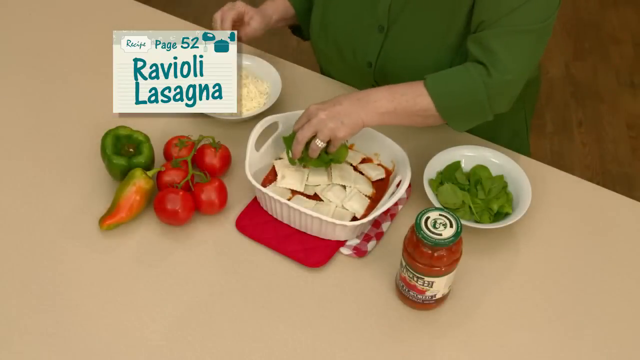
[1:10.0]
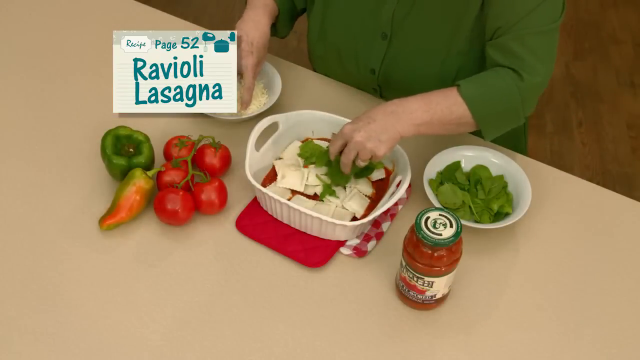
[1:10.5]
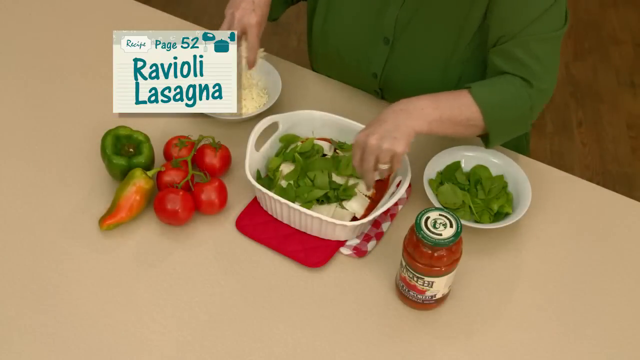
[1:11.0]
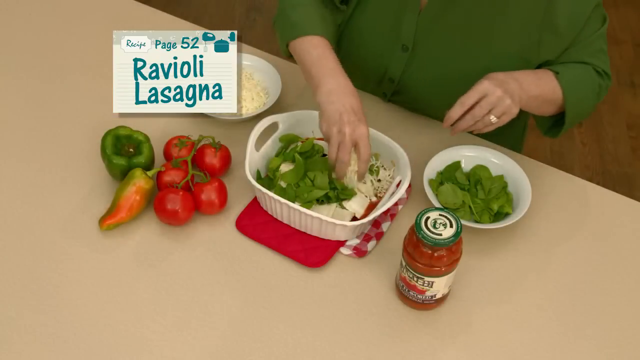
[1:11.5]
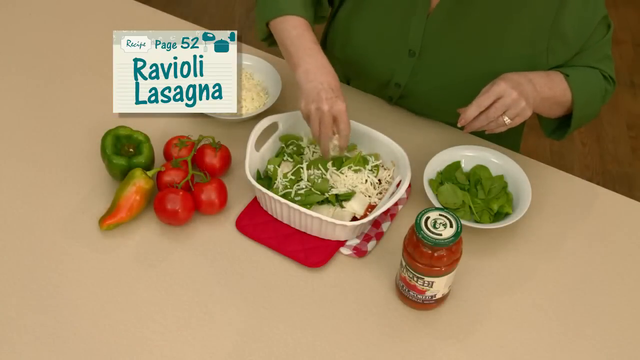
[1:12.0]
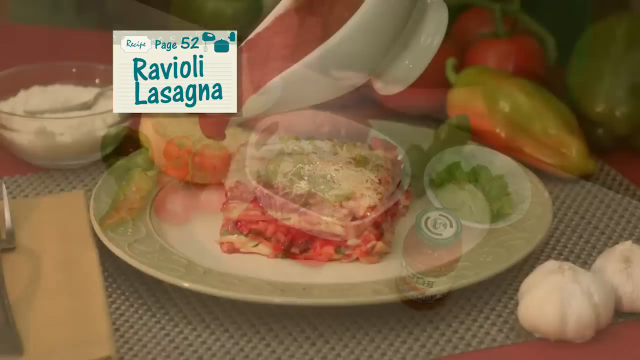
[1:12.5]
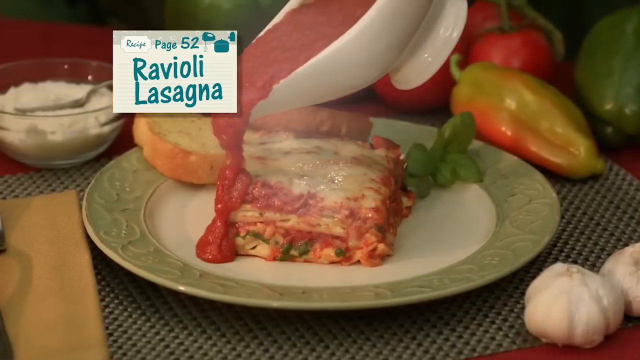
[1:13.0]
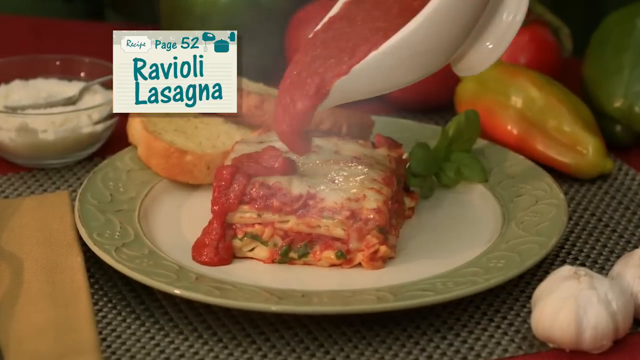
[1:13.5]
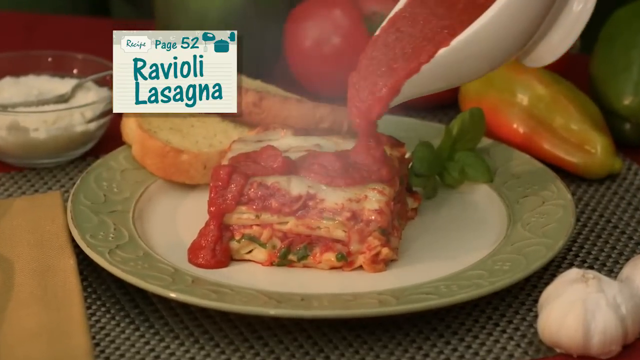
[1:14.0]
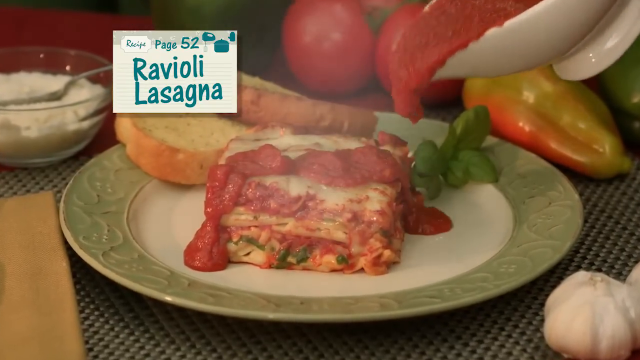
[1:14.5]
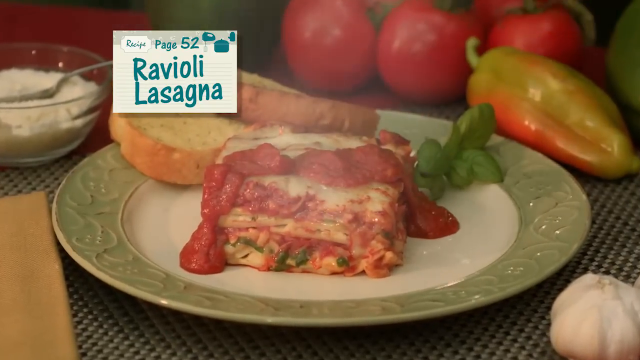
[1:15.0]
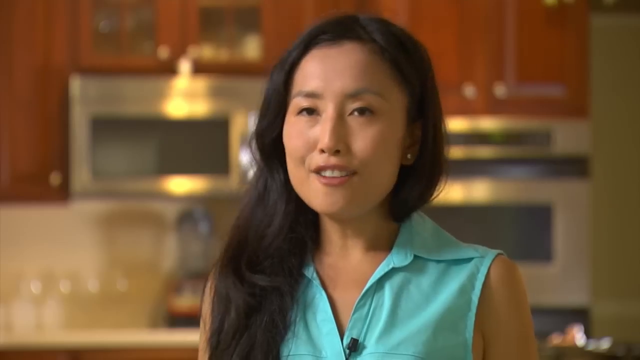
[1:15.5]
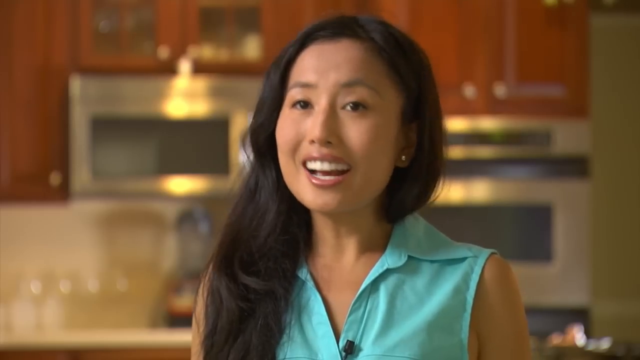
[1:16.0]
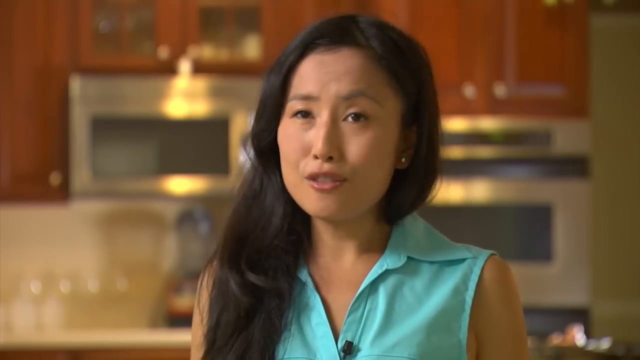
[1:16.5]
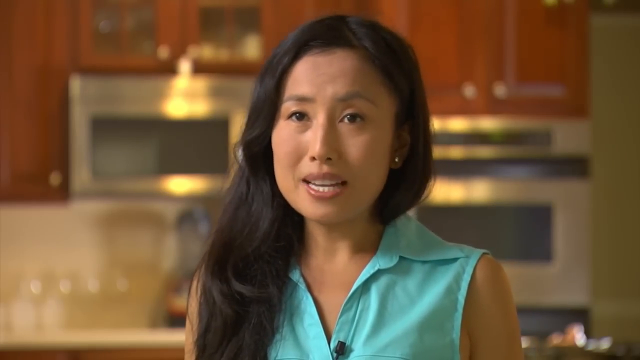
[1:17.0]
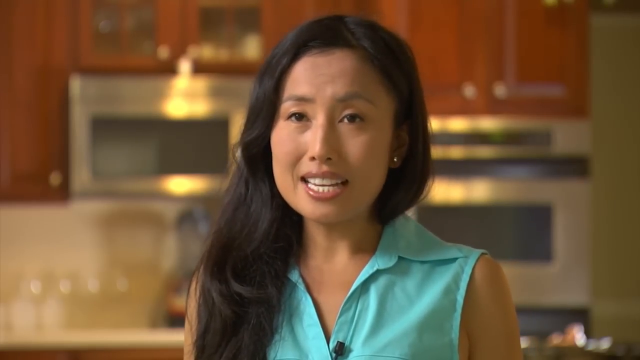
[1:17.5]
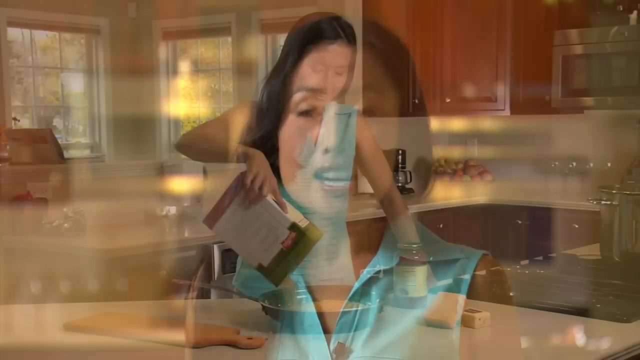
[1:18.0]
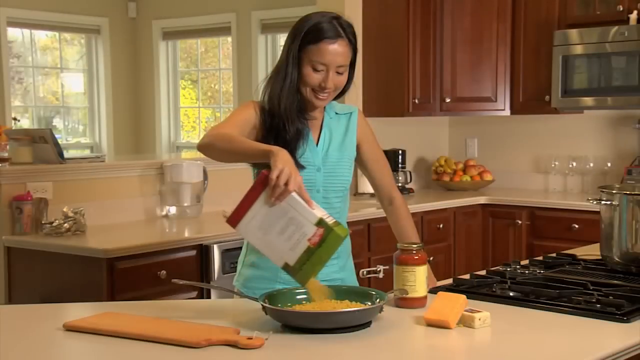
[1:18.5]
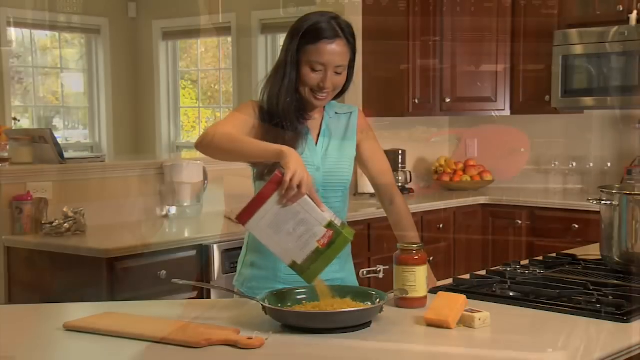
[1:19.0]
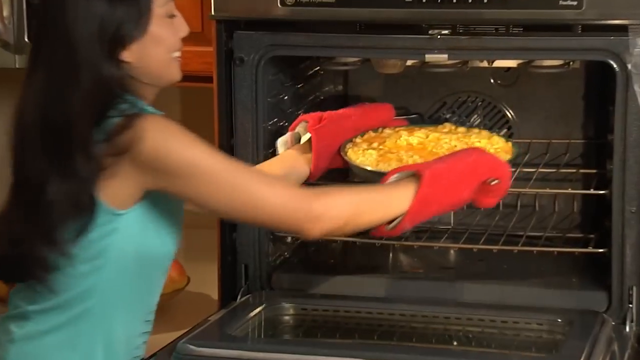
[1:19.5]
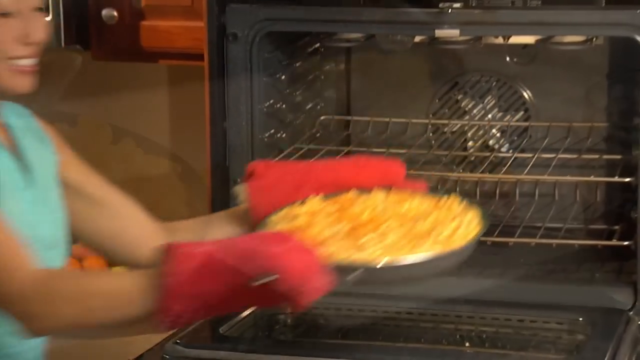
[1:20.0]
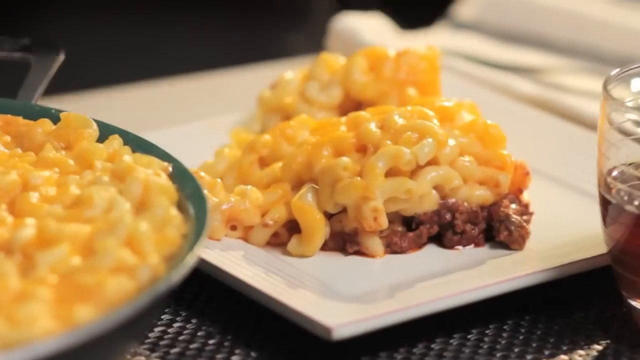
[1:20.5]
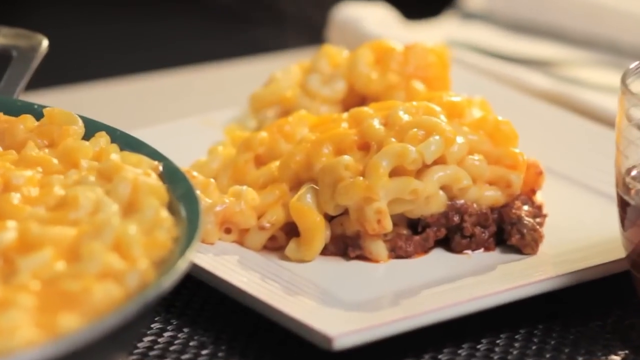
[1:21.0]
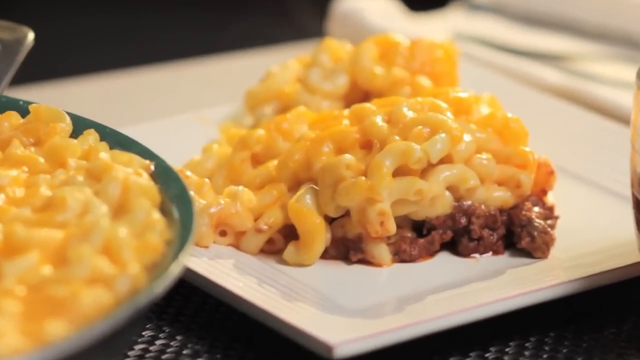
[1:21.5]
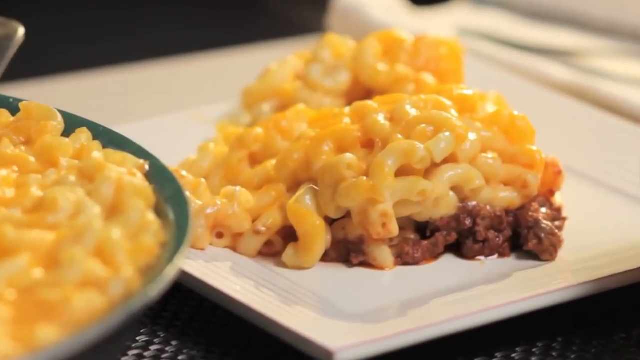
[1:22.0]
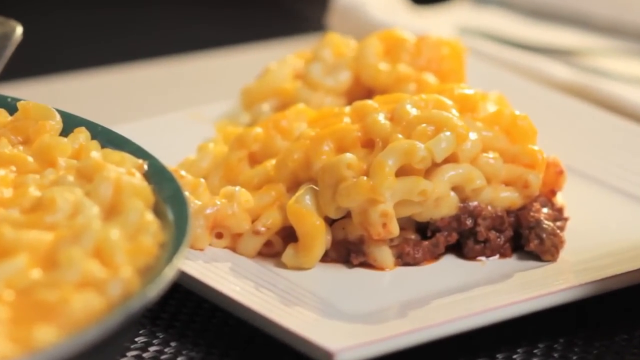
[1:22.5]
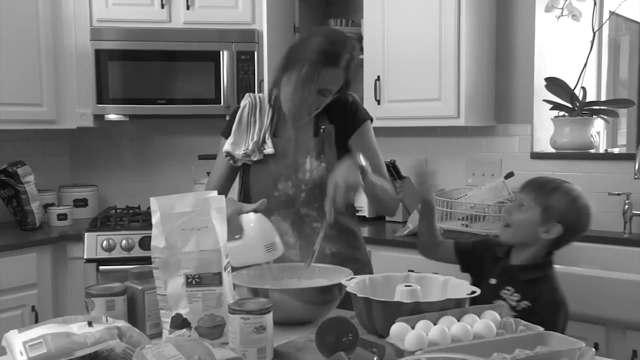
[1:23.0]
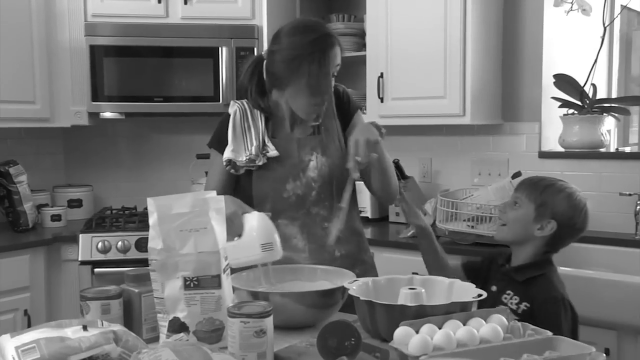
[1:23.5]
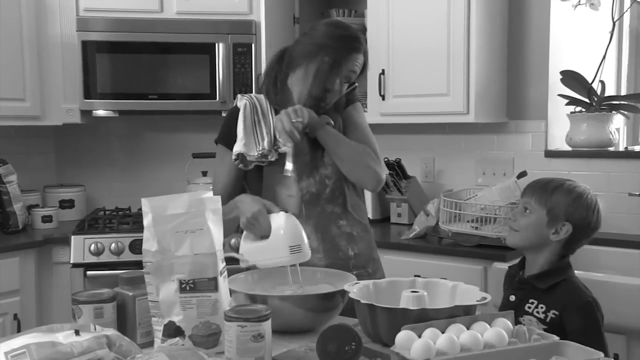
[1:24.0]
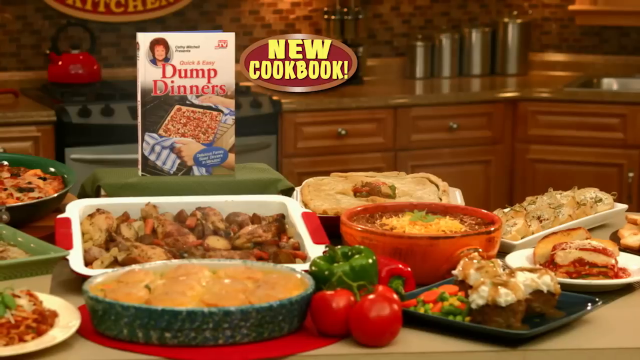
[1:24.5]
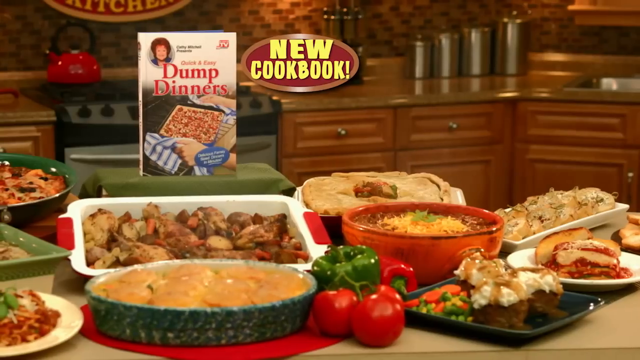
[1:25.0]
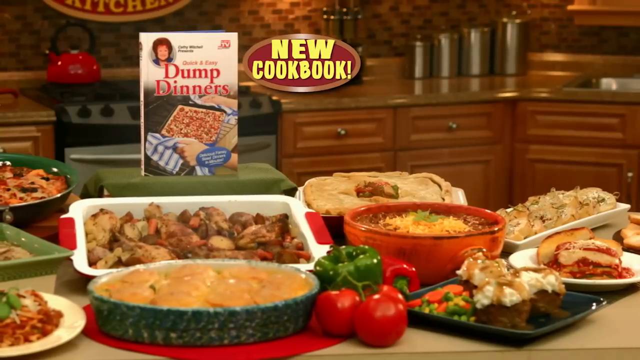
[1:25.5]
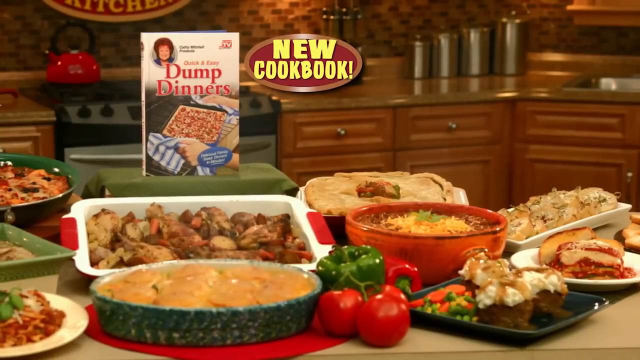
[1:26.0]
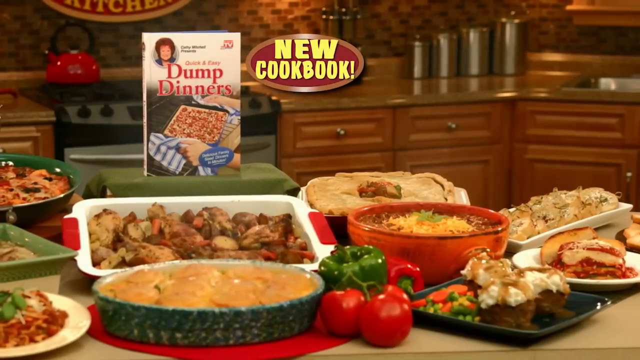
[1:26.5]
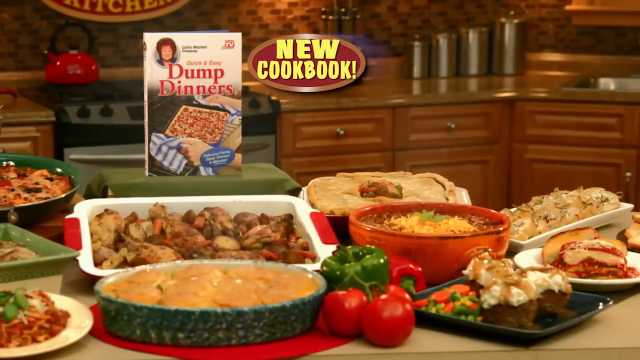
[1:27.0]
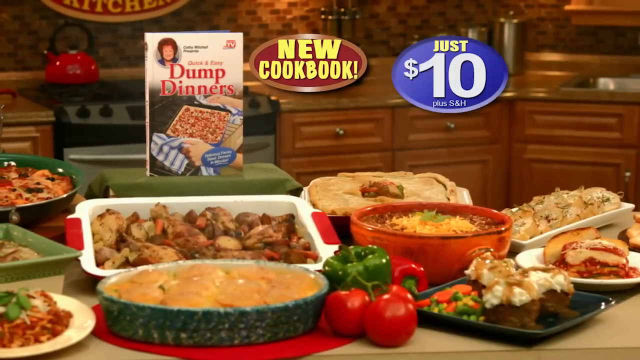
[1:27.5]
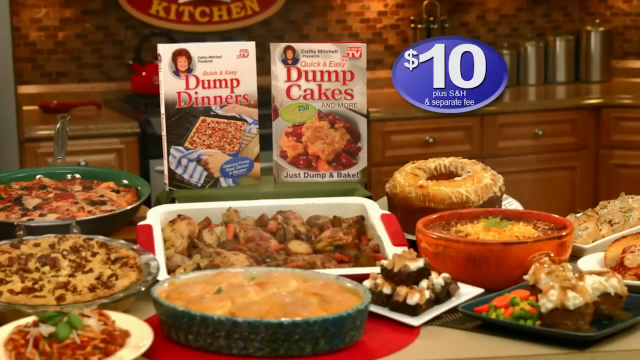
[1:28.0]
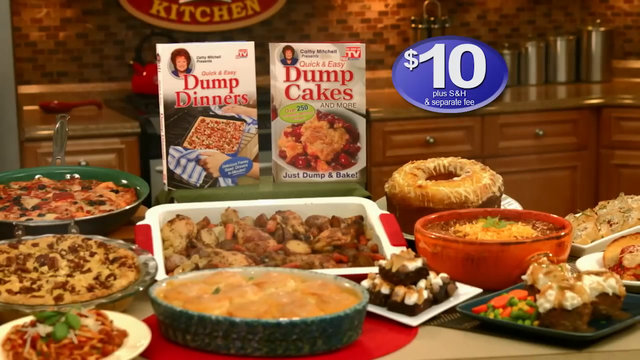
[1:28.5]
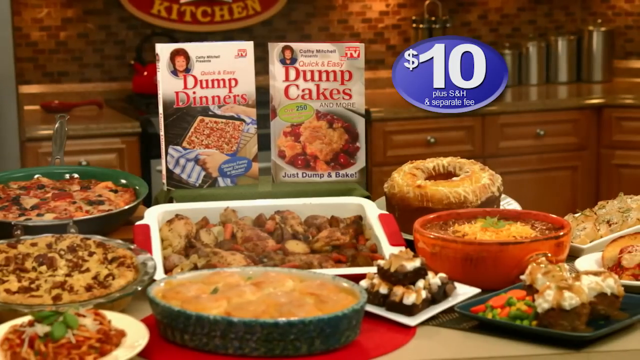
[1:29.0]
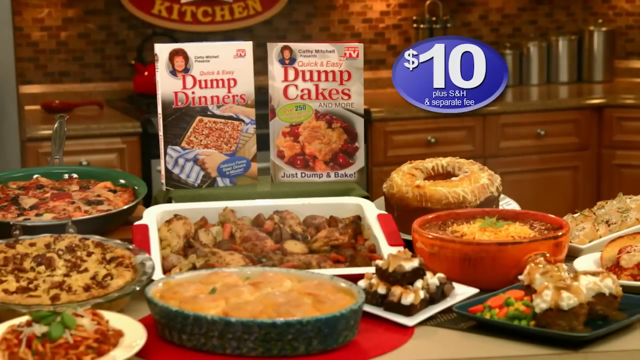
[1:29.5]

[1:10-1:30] She has all the ingredients: tomatoes, peppers, leaves and pasta sauce, and she puts them into a small white bowl. While she does this, the video transitions to the lasagna fully done, with her pouring pasta on top of the finished lasagna; steam rises from the pasta. The video then transitions to a different woman cooking. She has long black hair, is very skinny, and is making what looks like macaroni, which she takes out of the oven fully done. Near the end of the video, she is advertising a new cookbook called Dump Diners, and a table holds her recent dishes, already fully cooked, apparently including some type of beef stew, macaroni, peppers and the pizza.